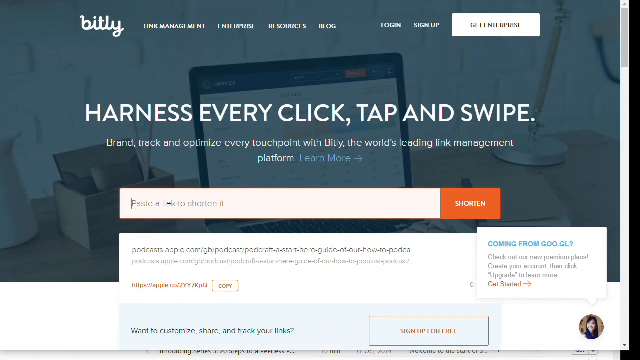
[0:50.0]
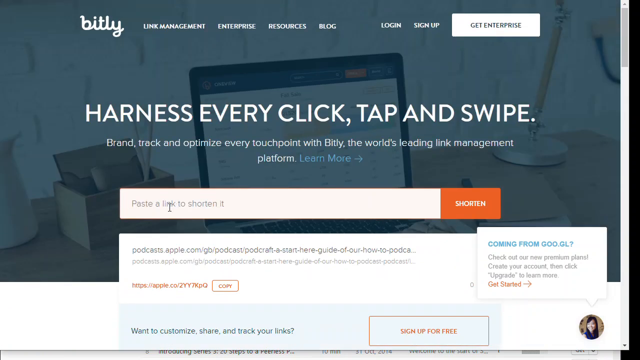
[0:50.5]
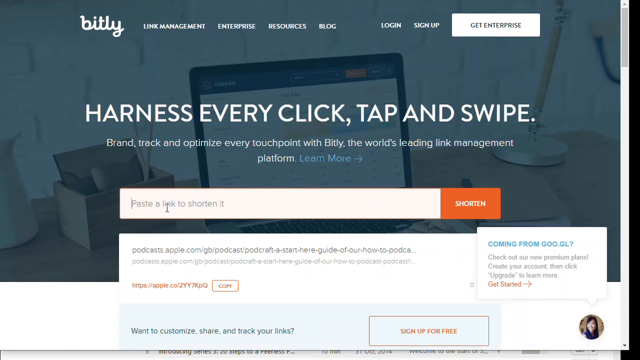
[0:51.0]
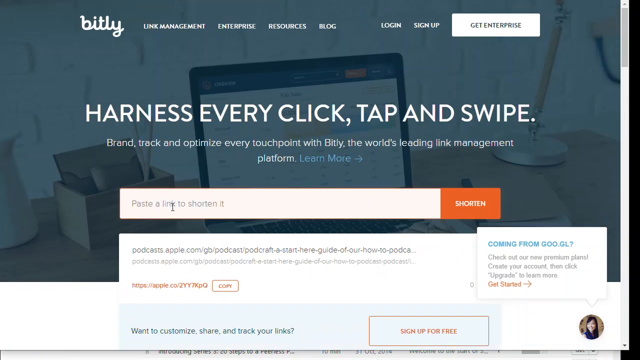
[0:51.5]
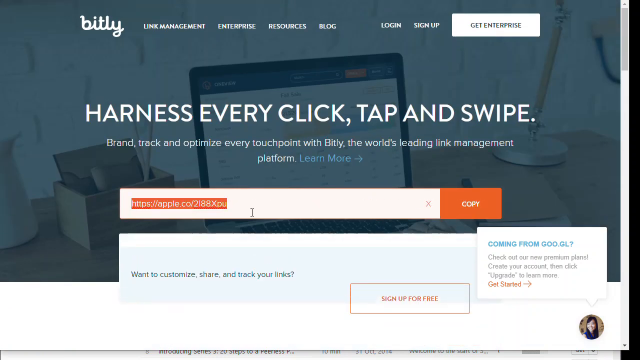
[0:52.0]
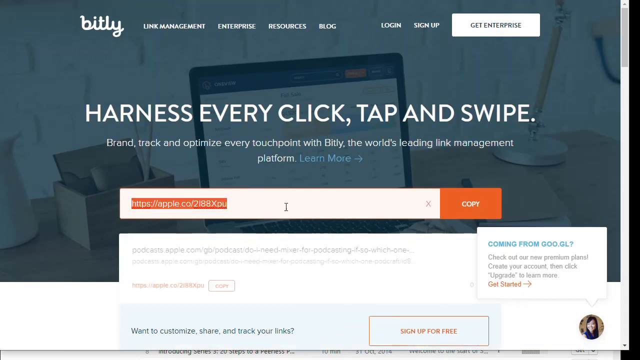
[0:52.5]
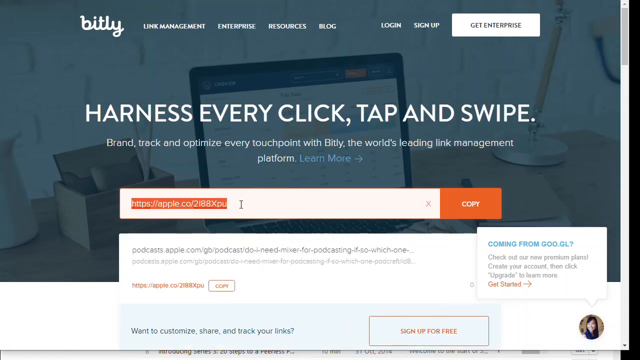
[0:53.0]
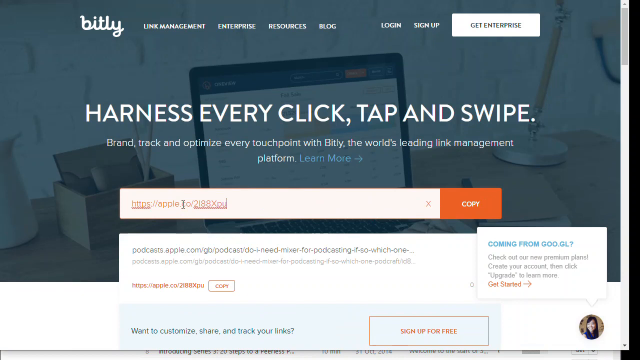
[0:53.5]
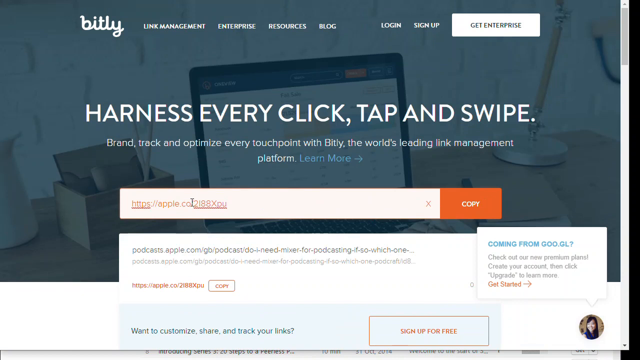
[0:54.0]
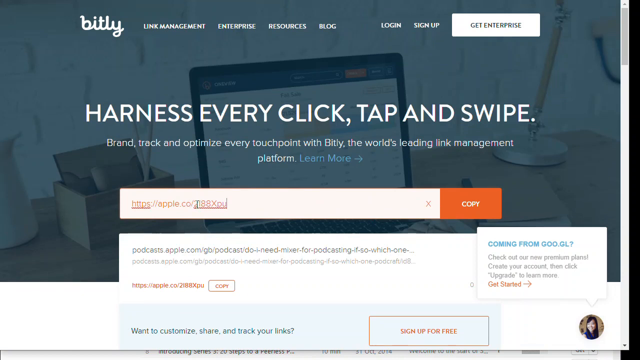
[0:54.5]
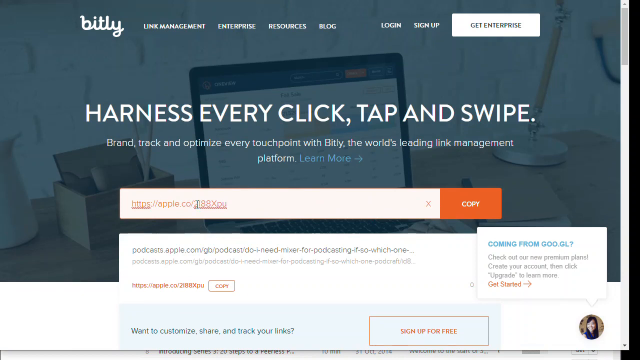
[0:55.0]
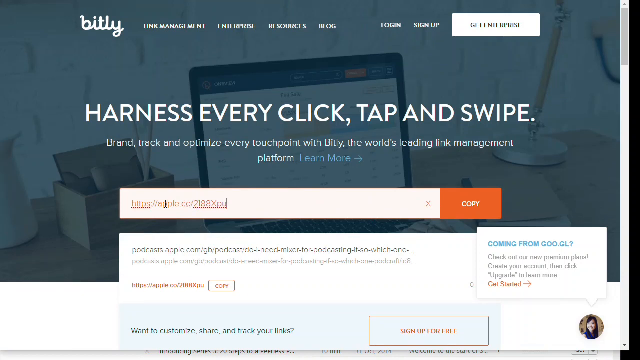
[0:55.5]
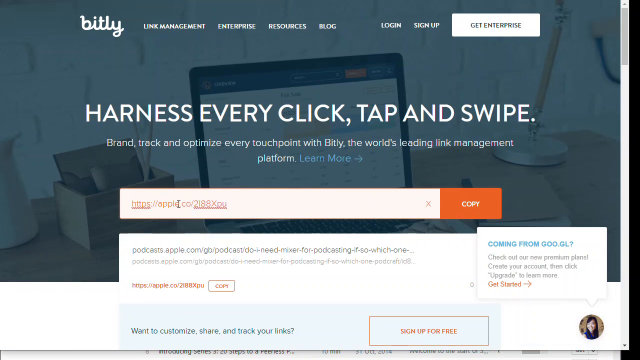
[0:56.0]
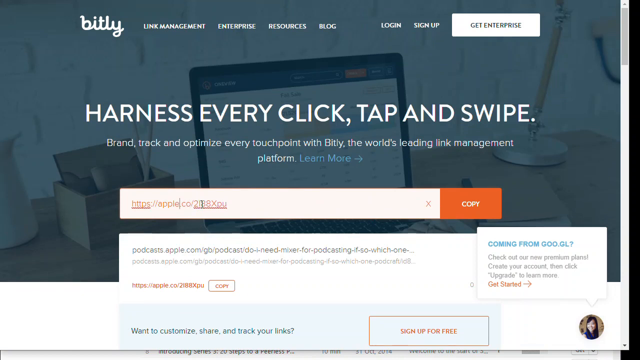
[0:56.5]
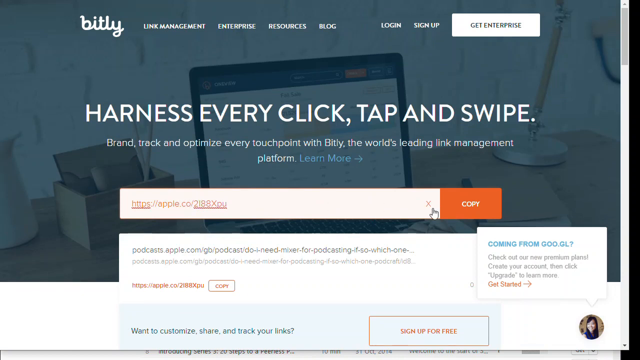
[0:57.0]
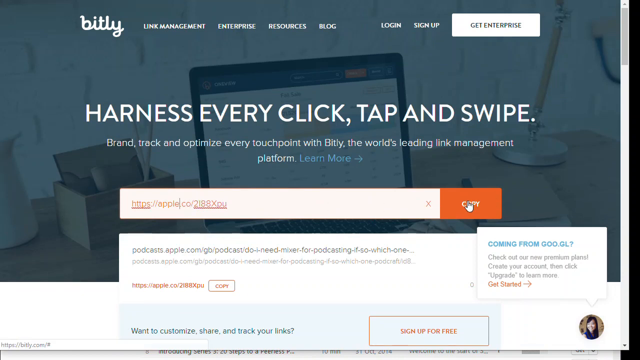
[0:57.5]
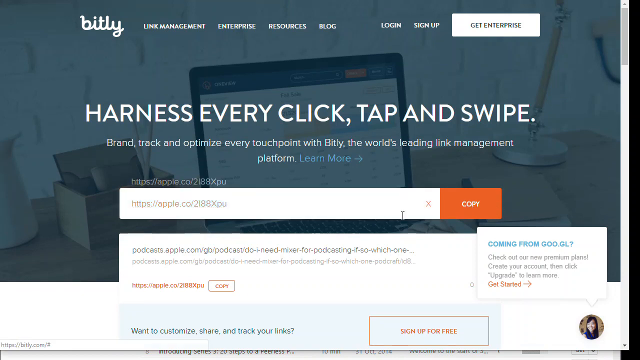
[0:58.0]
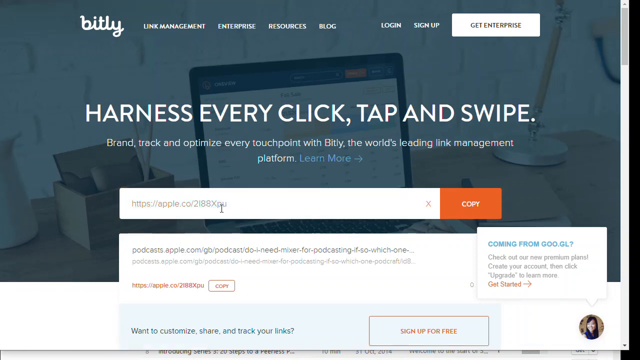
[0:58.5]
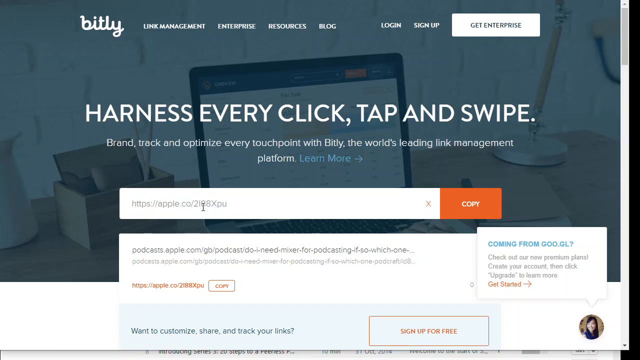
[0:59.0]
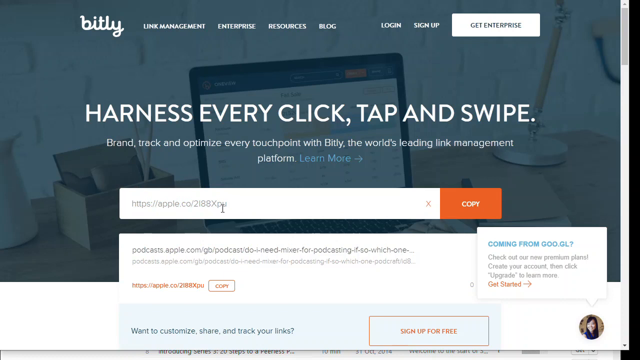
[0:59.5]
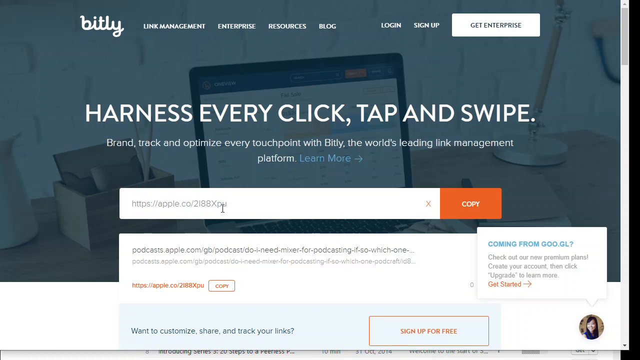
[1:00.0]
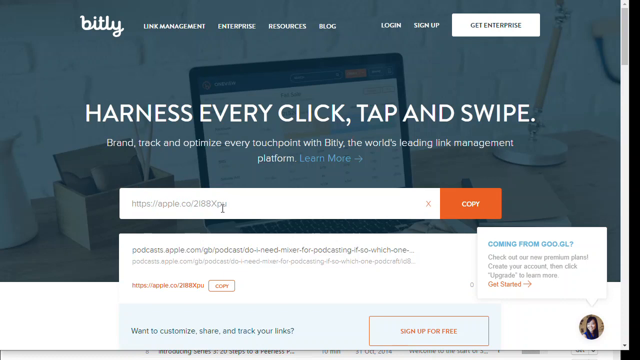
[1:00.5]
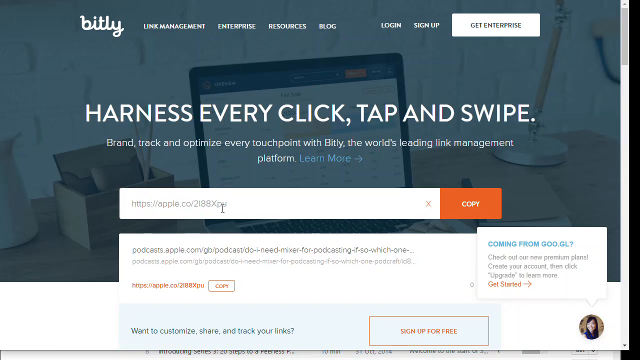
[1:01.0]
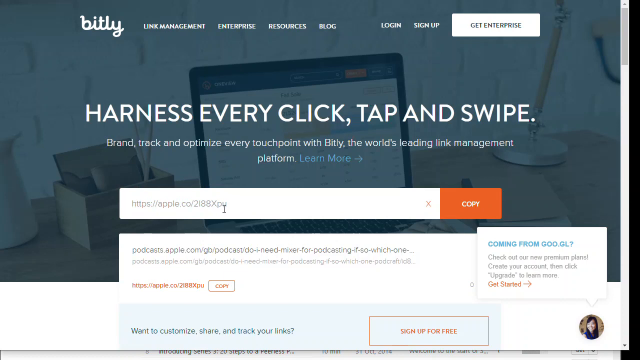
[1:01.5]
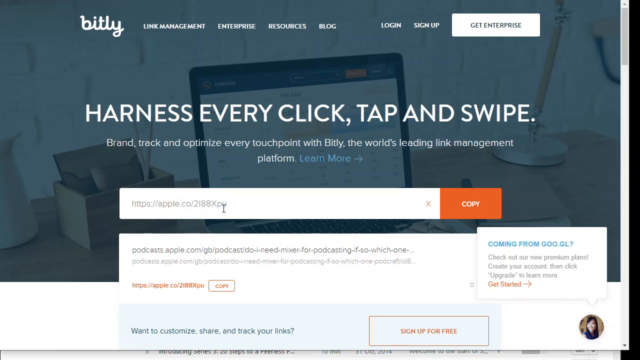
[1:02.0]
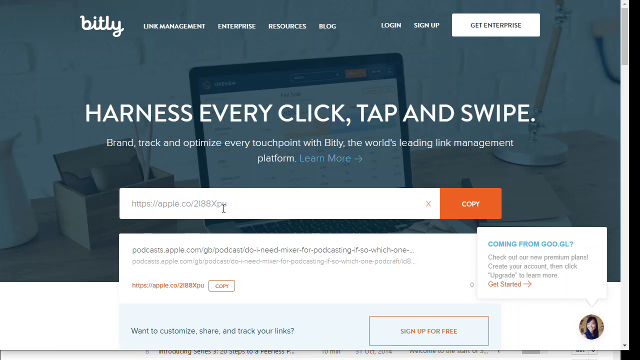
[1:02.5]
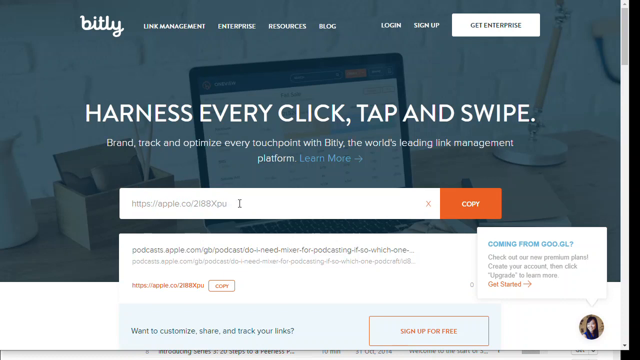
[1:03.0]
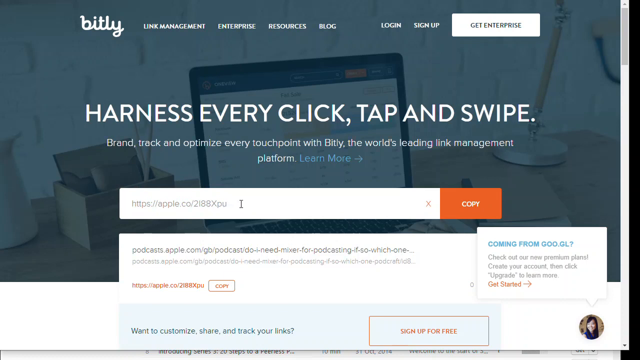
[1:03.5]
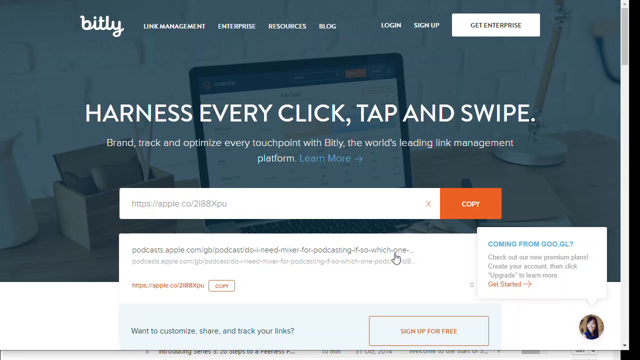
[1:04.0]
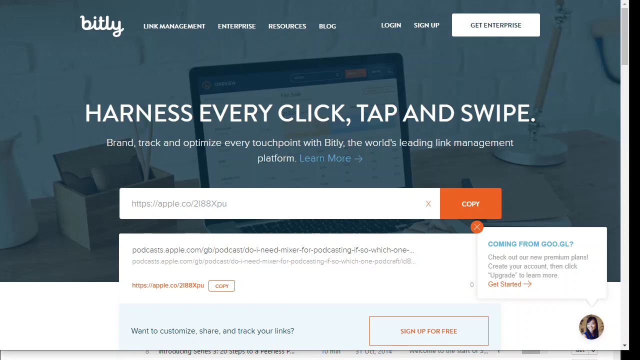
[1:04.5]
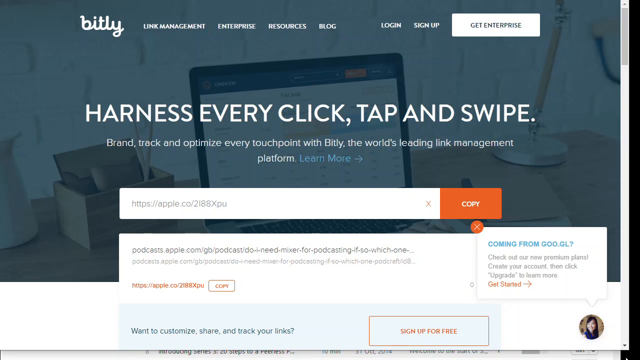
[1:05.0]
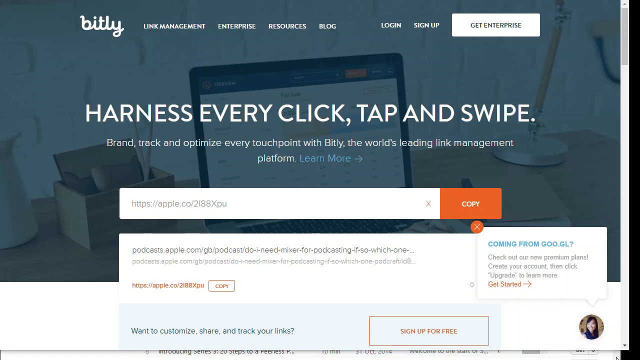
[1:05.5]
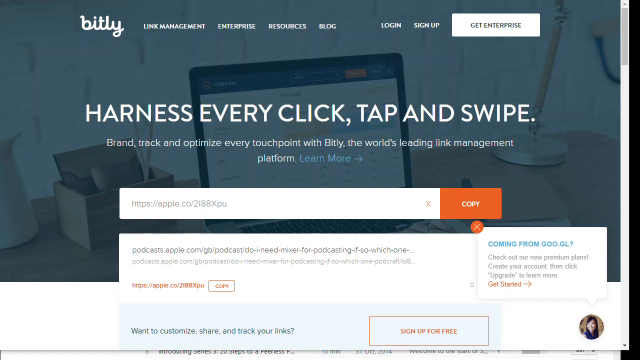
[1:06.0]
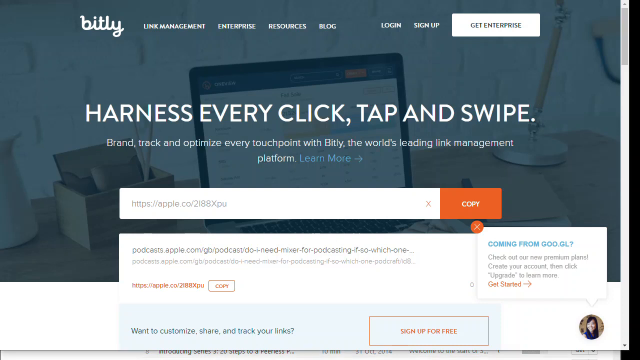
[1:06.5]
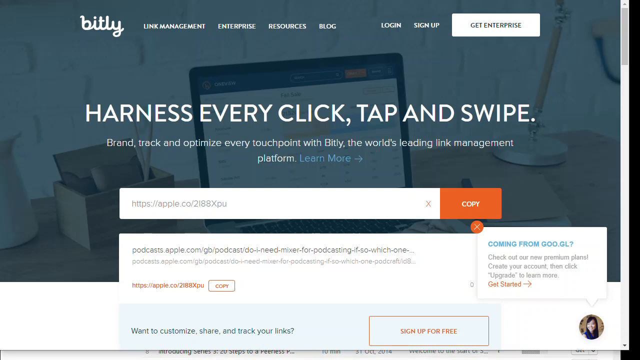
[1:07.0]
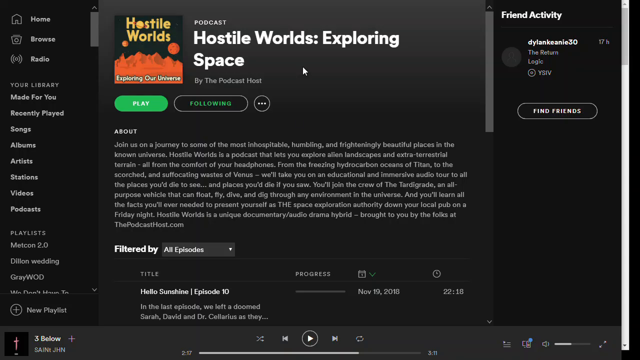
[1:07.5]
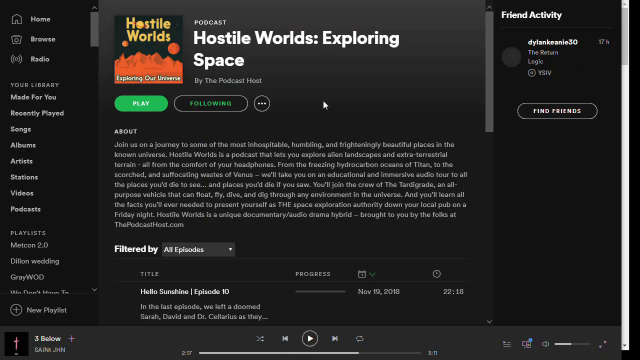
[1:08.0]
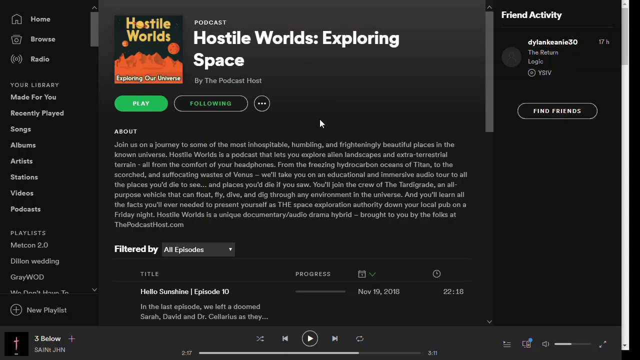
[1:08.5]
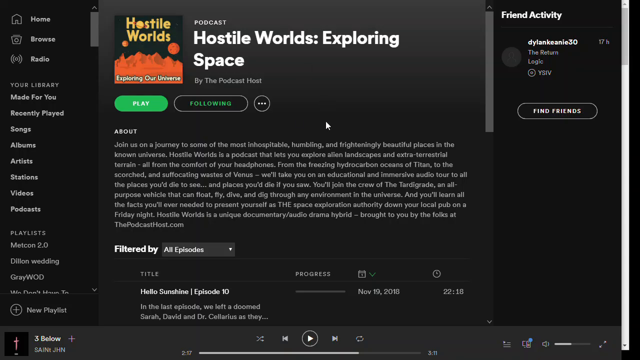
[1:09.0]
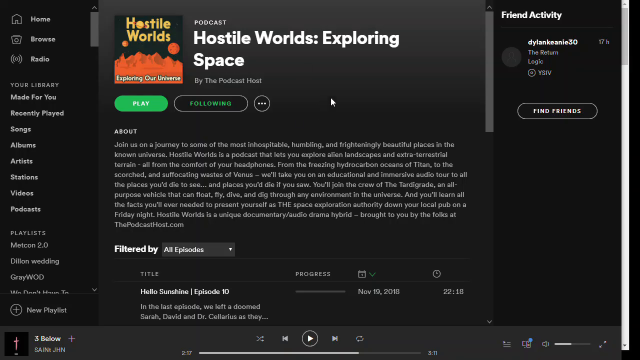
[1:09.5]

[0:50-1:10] A Bitly page says "harness every click, tap, and swipe," with a text box whose default text says "paste a link to shorten it" and an orange button on the right that says "shorten." Something is pasted into the box, shorten is clicked, and it becomes a short link, "https://apple.co," with a copy icon that can be used to copy it. This URL shortening seems to be specific to Apple Podcasts. Below the field is the original URL that was shortened, which is quite long, so the shortened URL is much shorter. The mouse hovers around the input field, and then the Spotify screen appears.